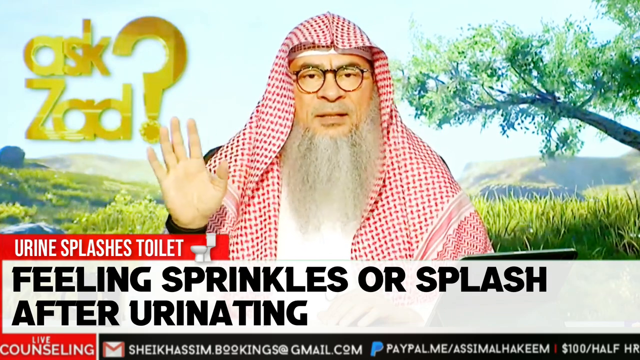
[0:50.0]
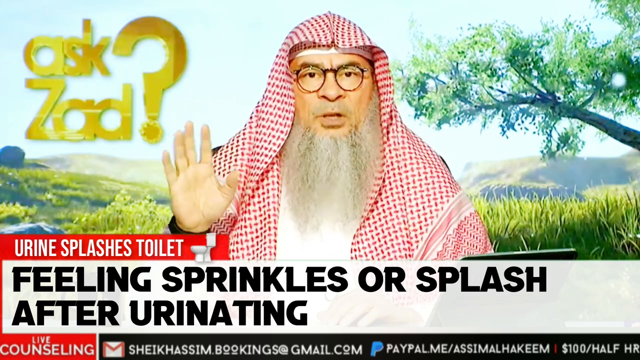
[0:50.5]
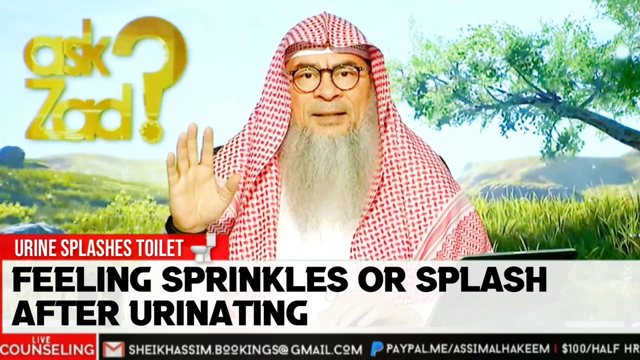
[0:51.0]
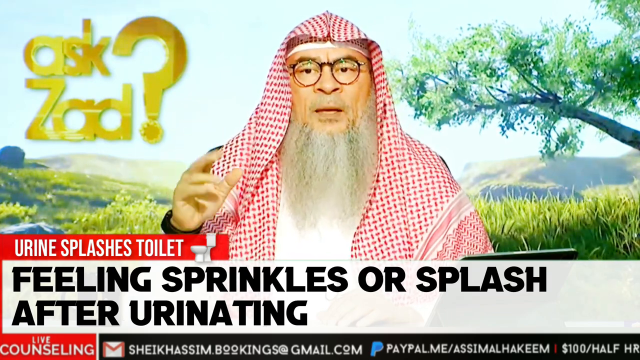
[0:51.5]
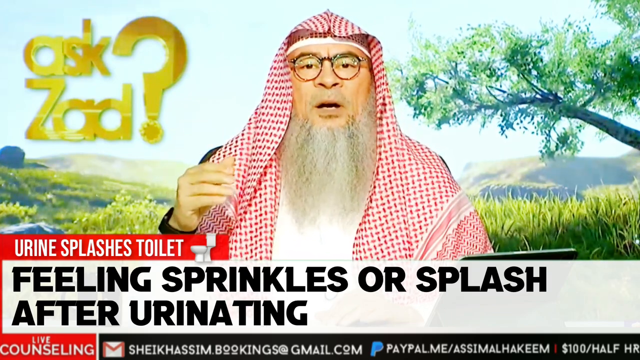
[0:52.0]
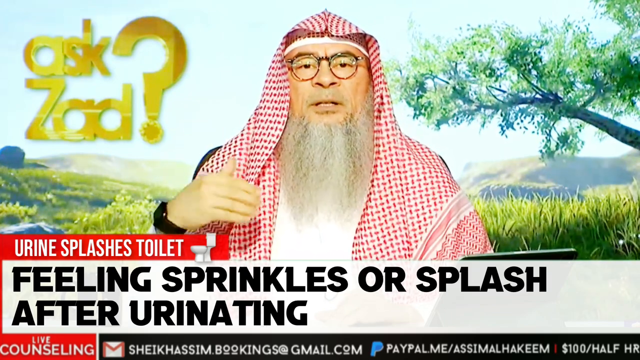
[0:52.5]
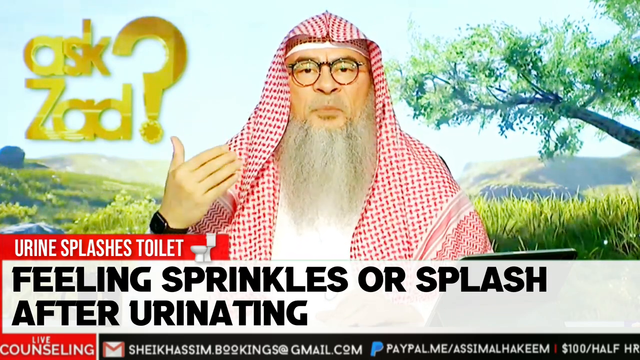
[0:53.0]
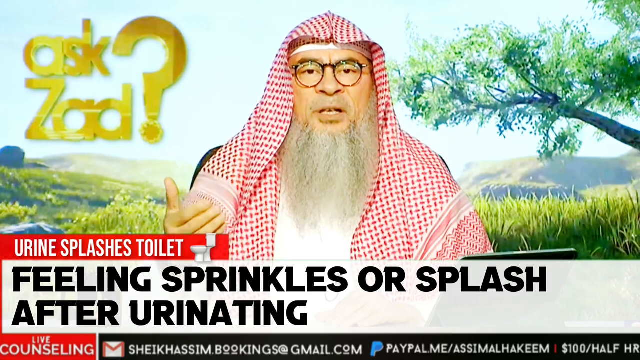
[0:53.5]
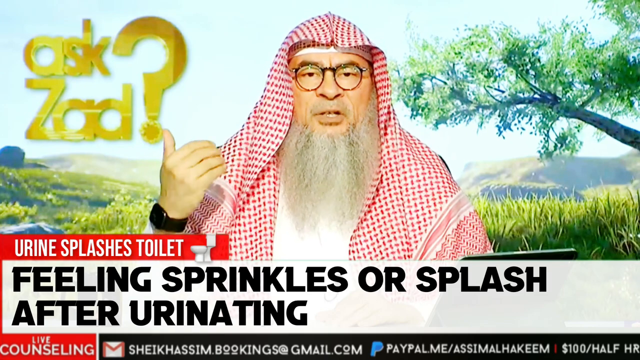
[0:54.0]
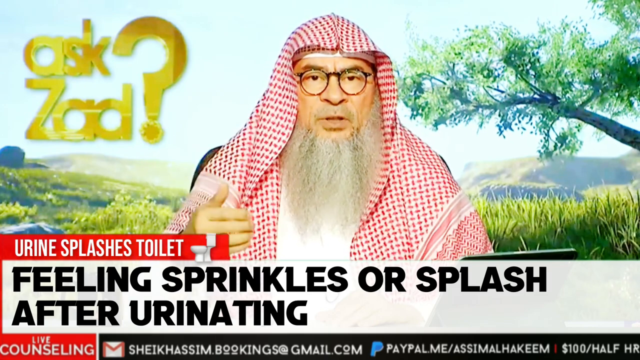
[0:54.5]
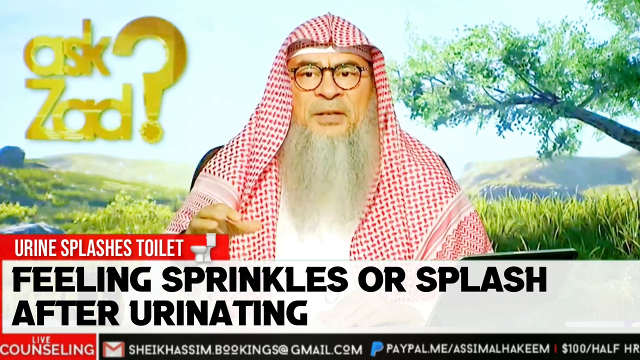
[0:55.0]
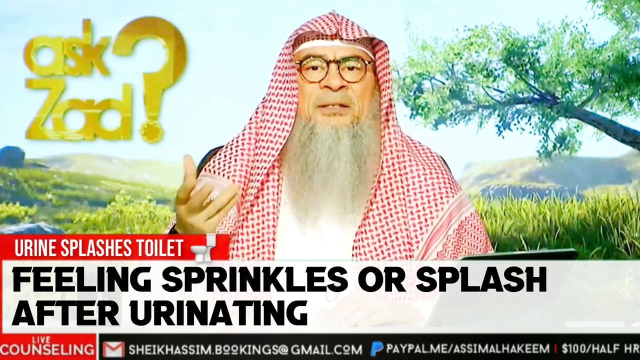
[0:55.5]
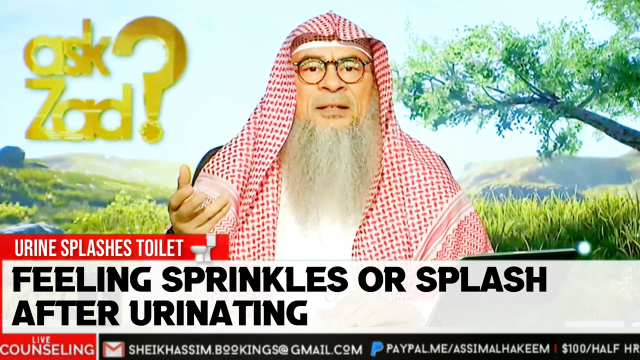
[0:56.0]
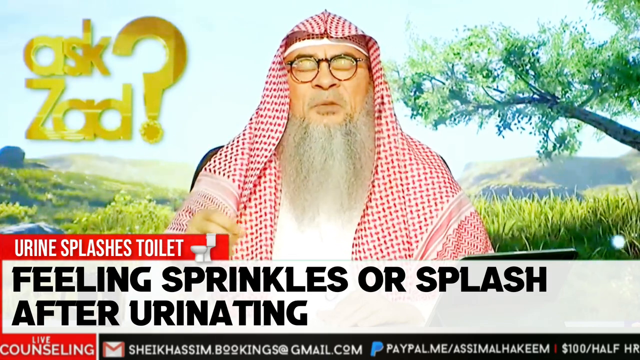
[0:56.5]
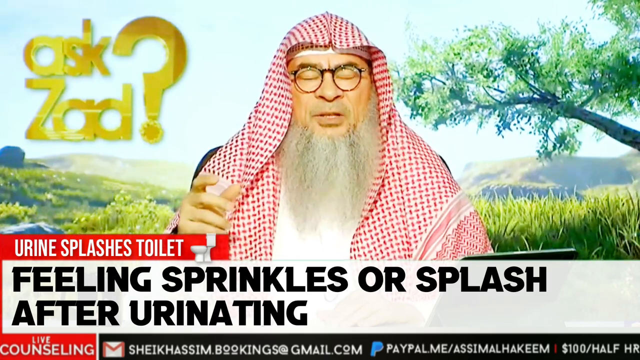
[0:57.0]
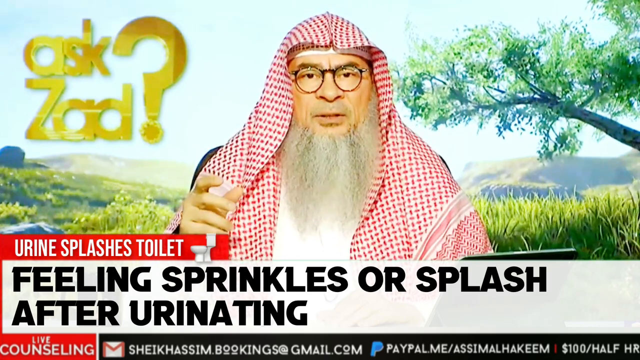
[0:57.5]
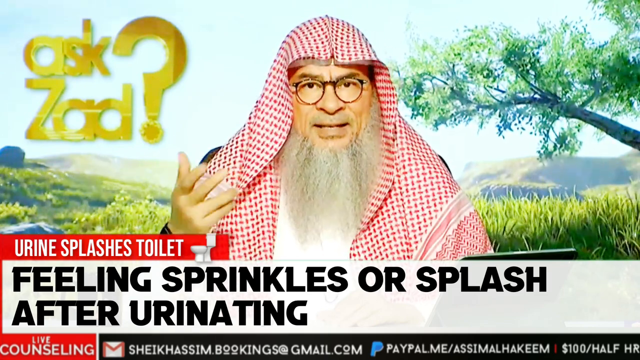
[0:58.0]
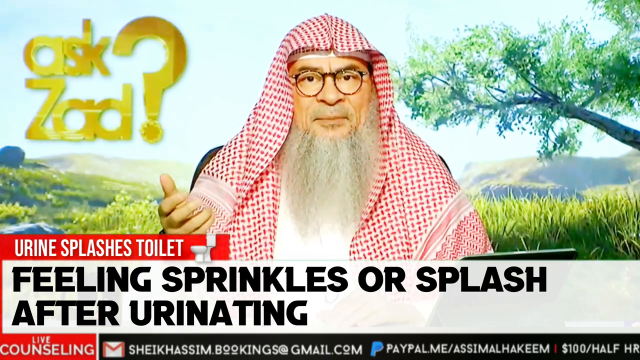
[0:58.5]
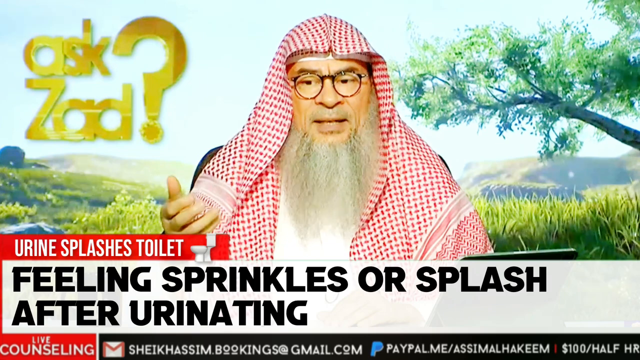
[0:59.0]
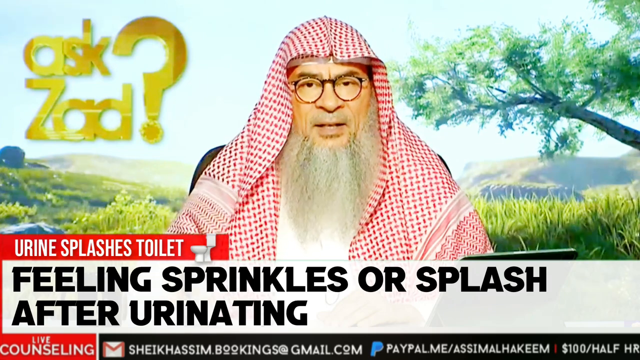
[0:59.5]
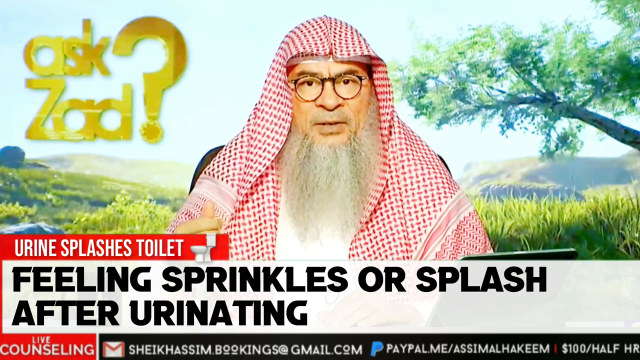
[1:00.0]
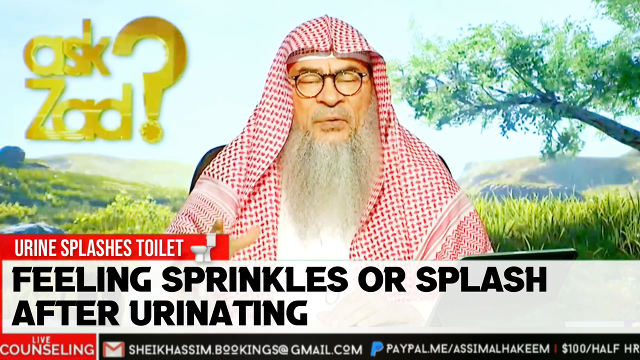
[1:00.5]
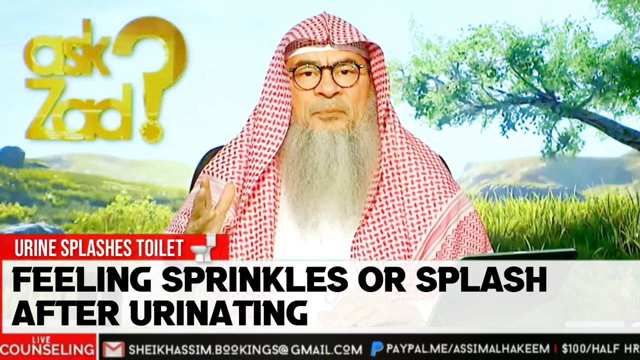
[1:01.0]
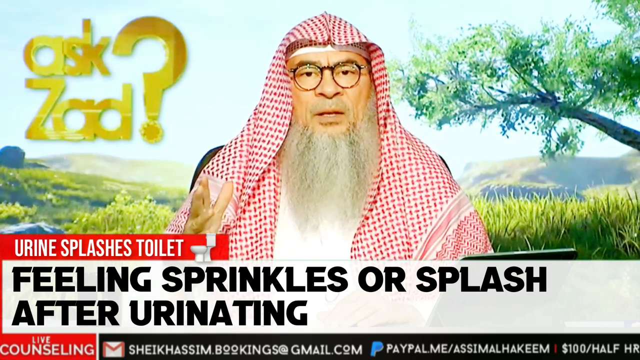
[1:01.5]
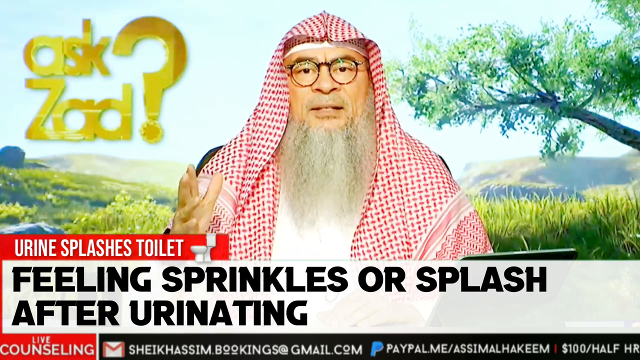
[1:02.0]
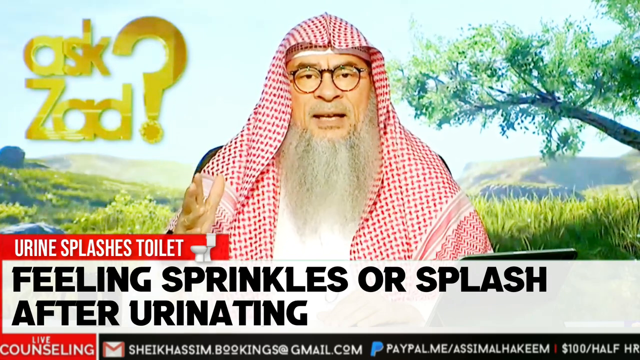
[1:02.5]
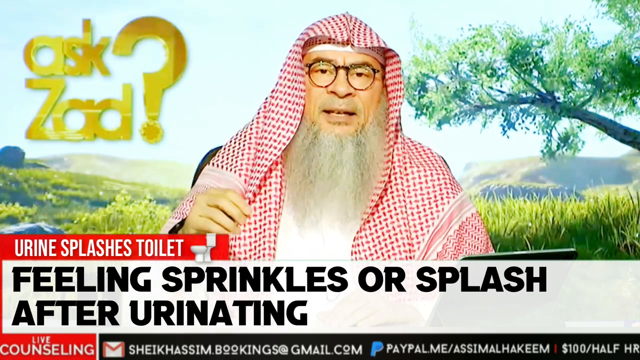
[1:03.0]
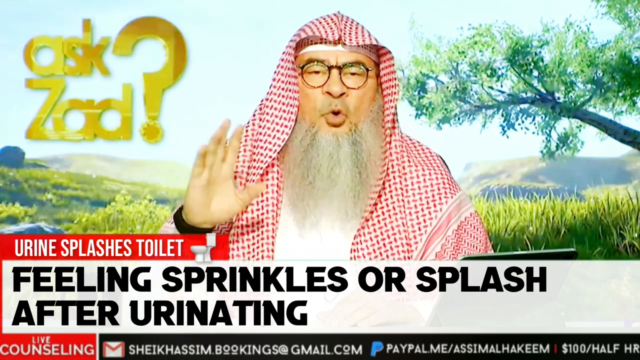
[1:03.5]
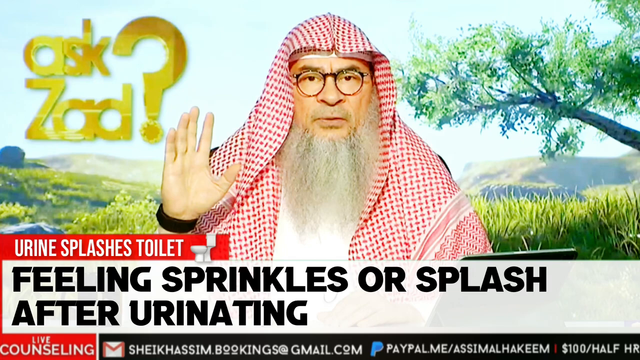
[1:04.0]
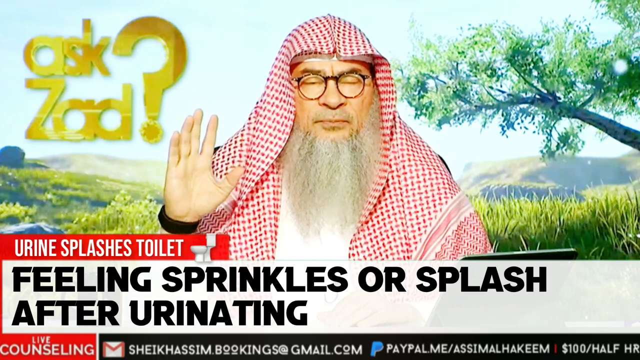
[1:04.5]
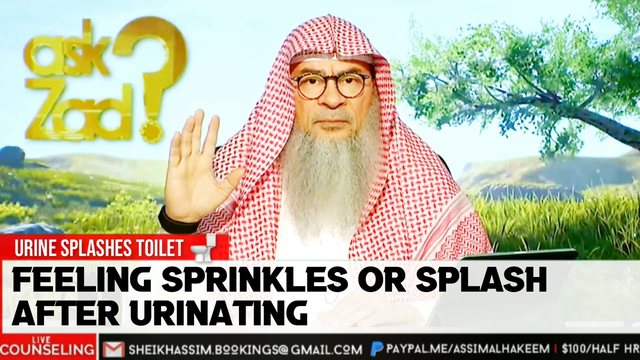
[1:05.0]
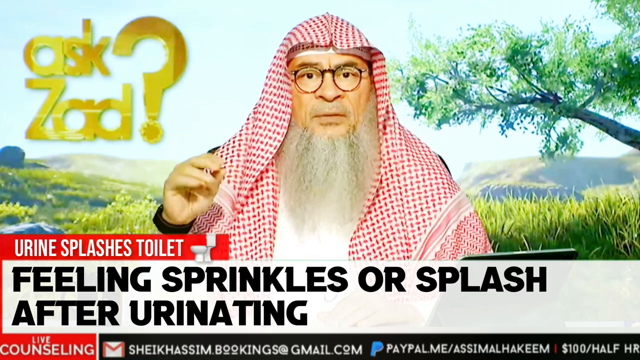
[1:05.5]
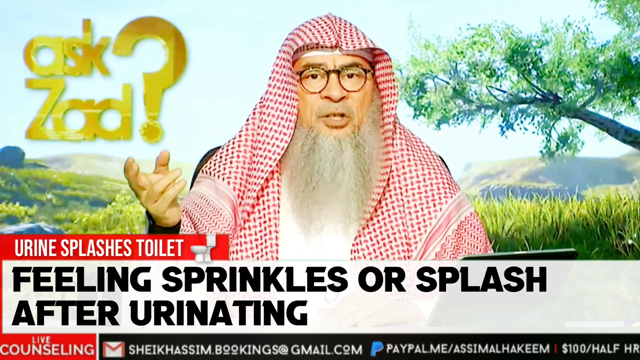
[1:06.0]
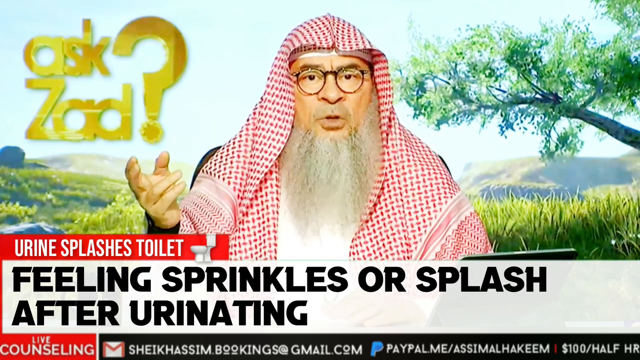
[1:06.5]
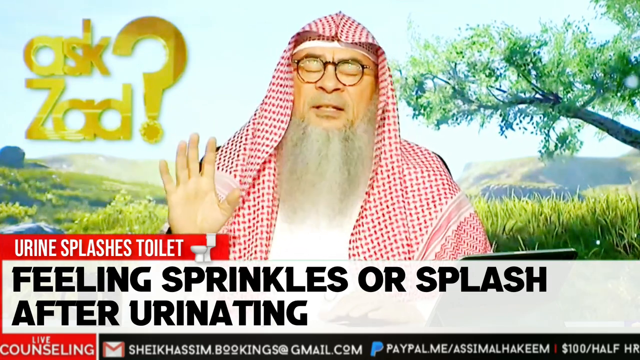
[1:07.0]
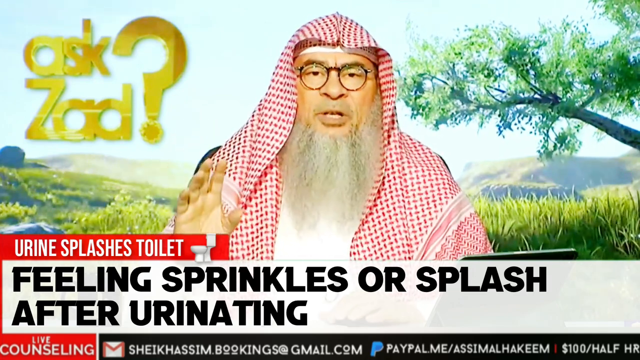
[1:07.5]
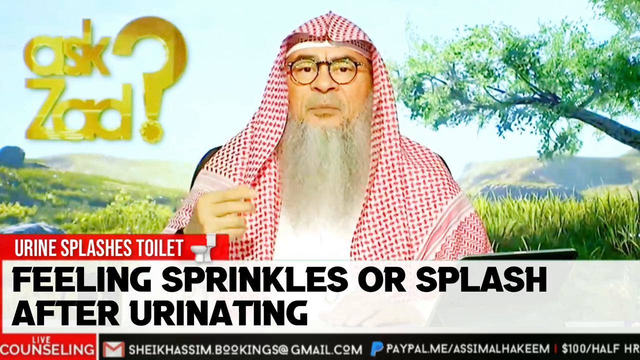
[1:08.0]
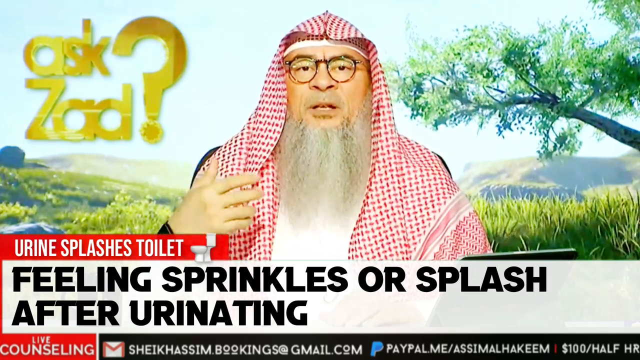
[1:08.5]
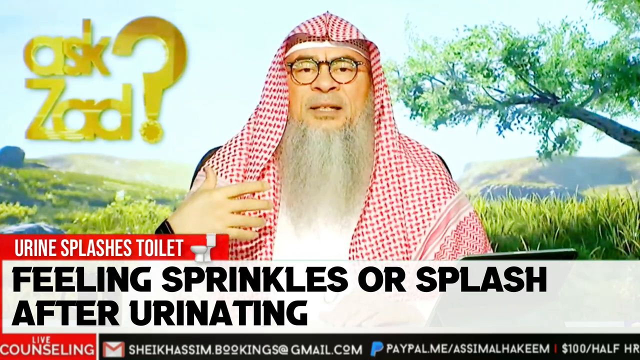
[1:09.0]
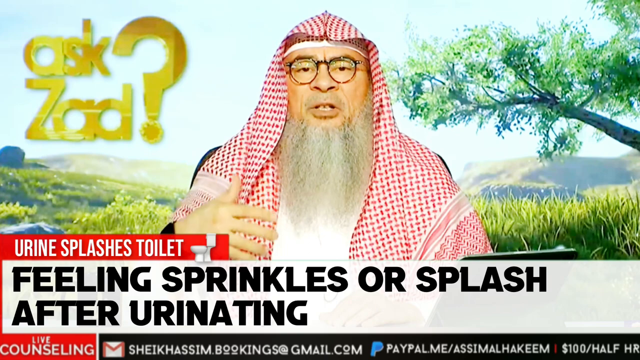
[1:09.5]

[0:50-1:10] The Sheik talks emphatically, gesturing with his right hand with his fingers bent, very expressive, and making good eye contact with the camera. On the right side the background seems to have a little motion: white dots, like sunshine or things floating in the air, move across the screen behind him, some moving farther away. In the image the wind appears to be blowing, with leaves rustling a little and grass swaying. It looks like a hillside, with what looks like pollen or some type of flower covering the whole countryside toward the back of a meadow. As he keeps talking, he might be reading a card, since every once in a while his eyes scan to the right.